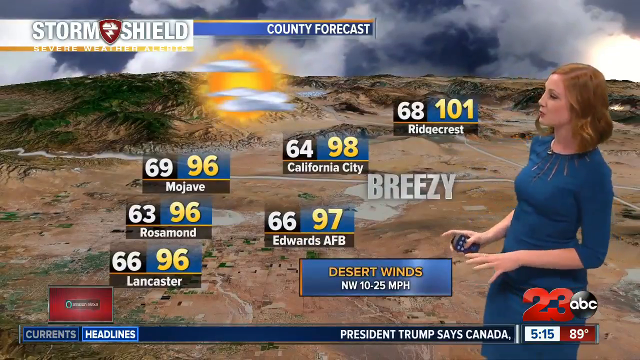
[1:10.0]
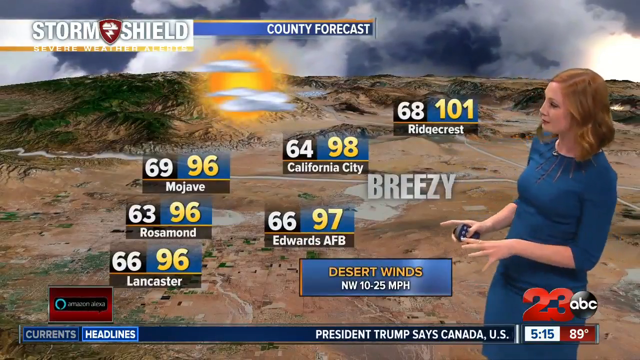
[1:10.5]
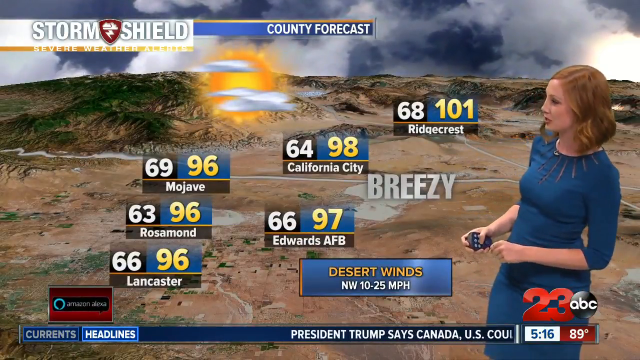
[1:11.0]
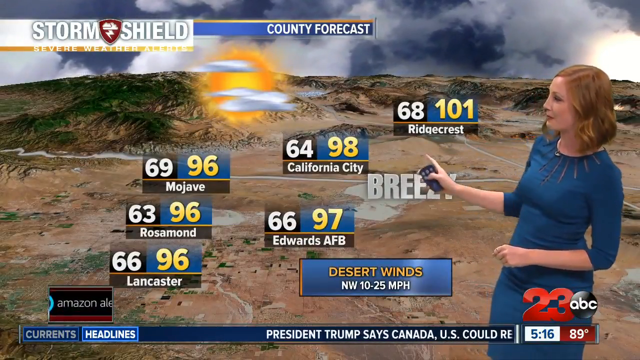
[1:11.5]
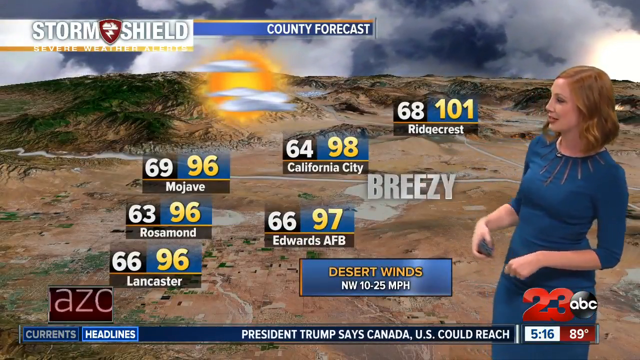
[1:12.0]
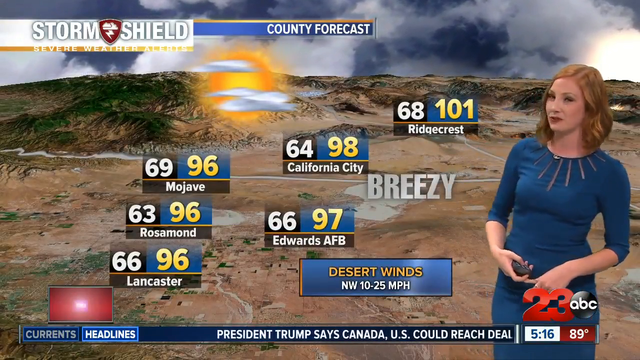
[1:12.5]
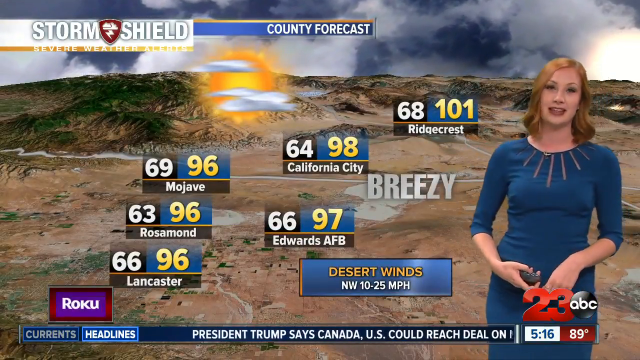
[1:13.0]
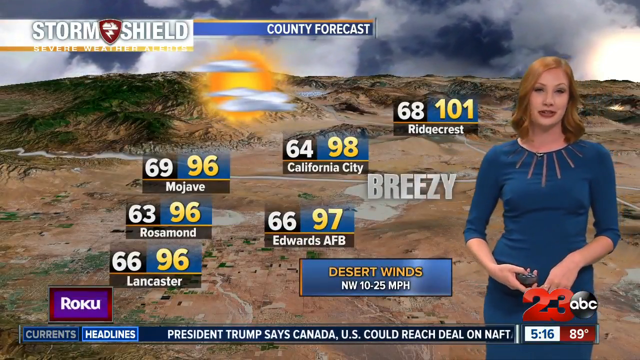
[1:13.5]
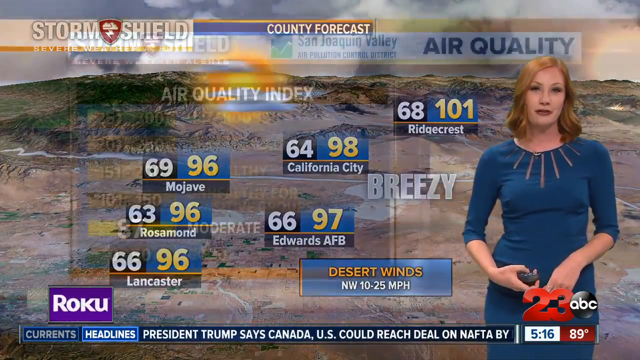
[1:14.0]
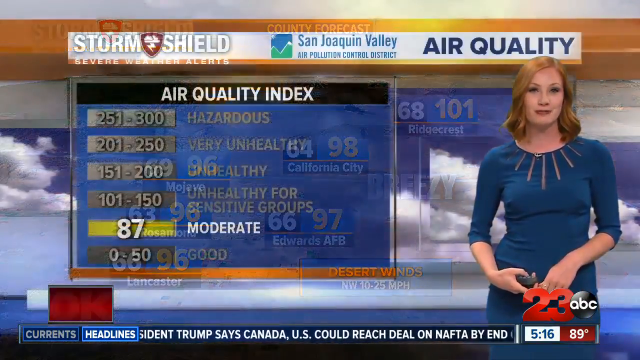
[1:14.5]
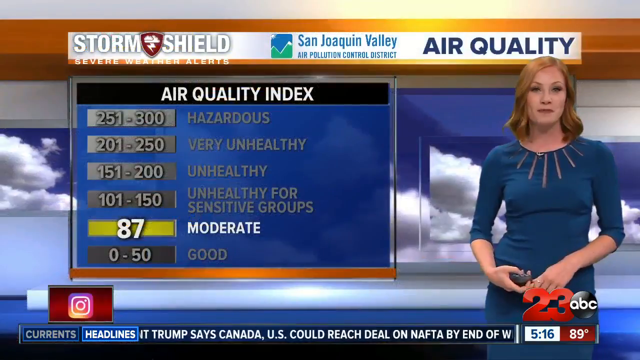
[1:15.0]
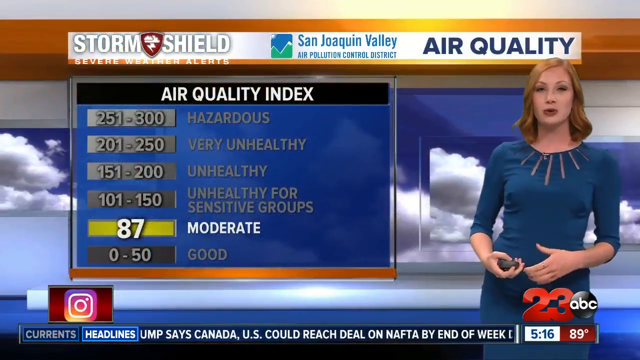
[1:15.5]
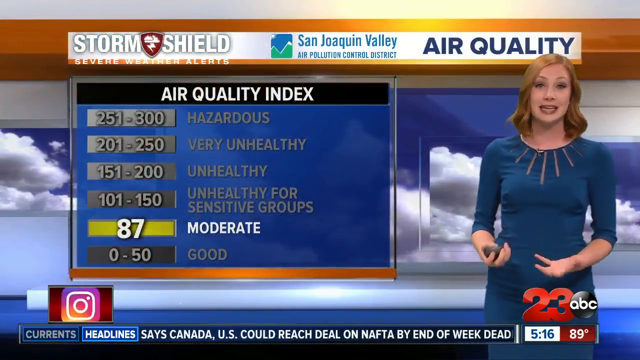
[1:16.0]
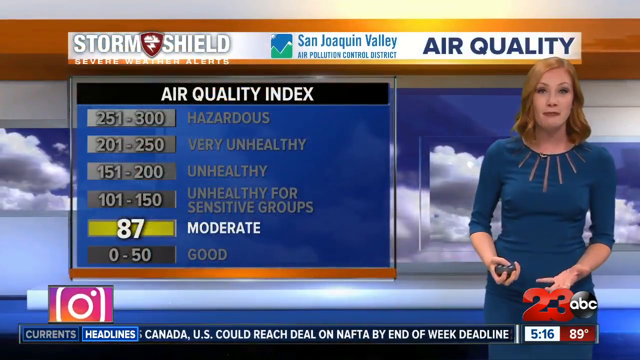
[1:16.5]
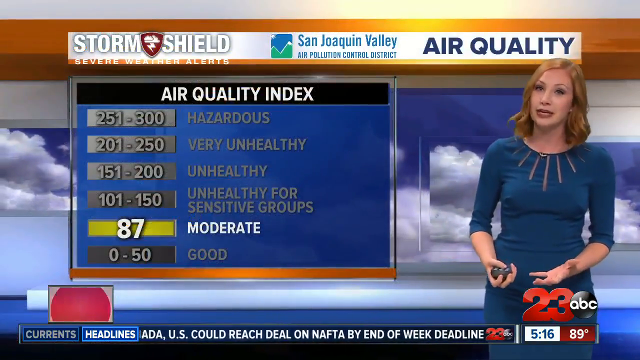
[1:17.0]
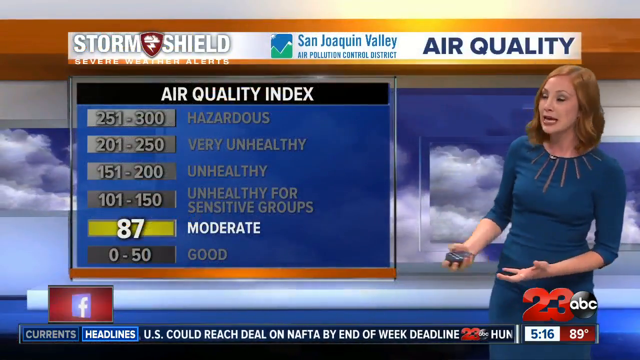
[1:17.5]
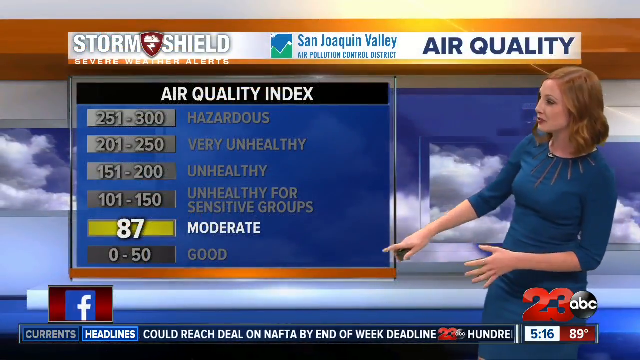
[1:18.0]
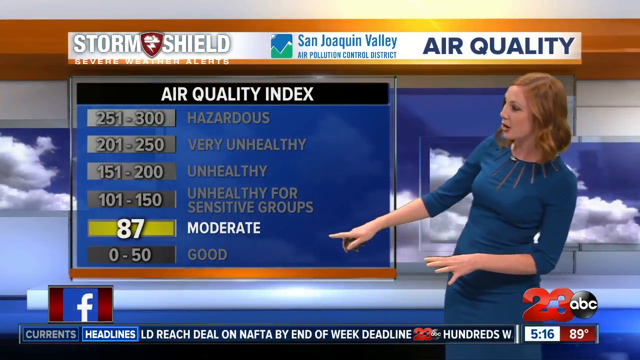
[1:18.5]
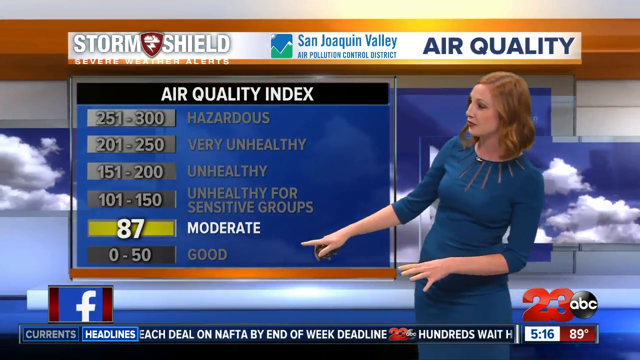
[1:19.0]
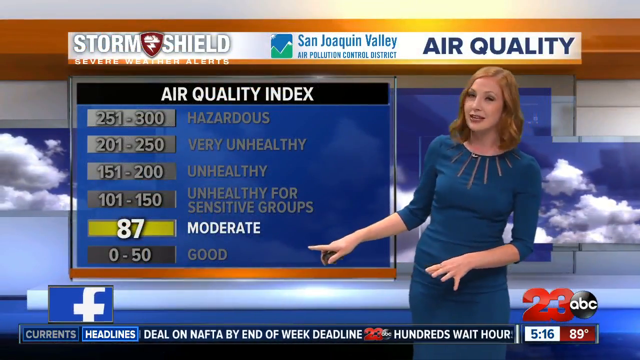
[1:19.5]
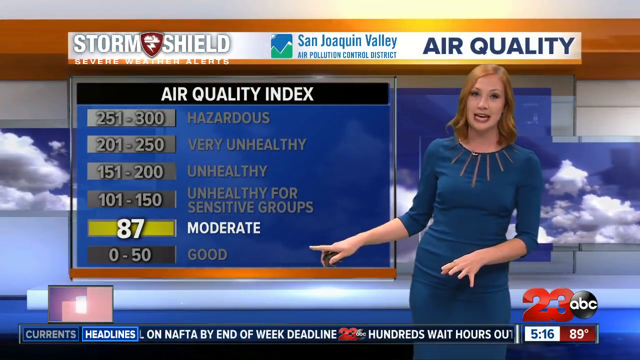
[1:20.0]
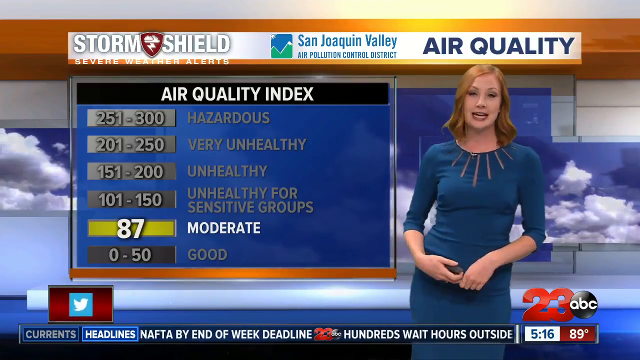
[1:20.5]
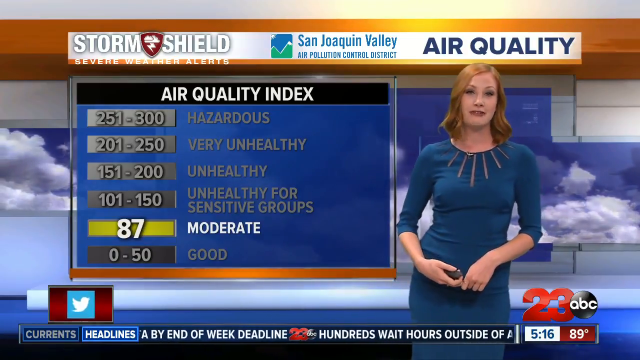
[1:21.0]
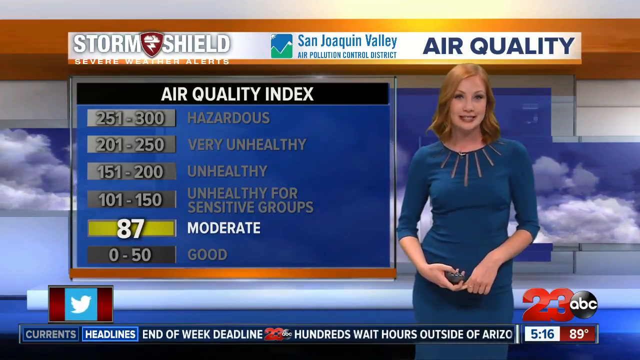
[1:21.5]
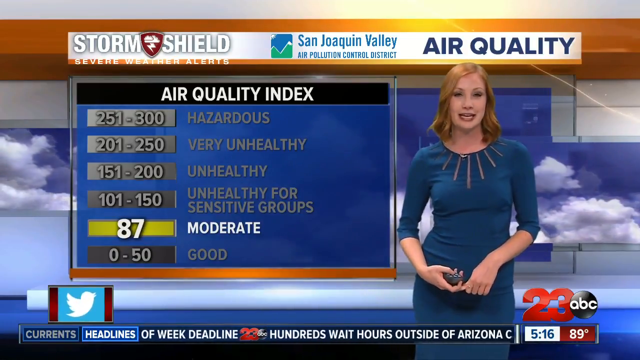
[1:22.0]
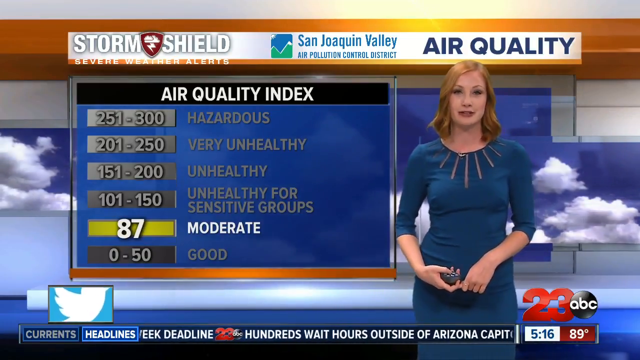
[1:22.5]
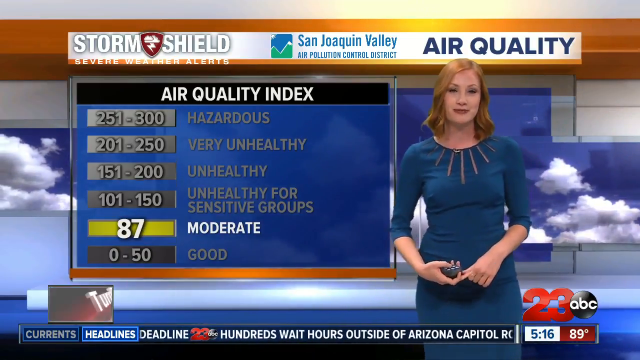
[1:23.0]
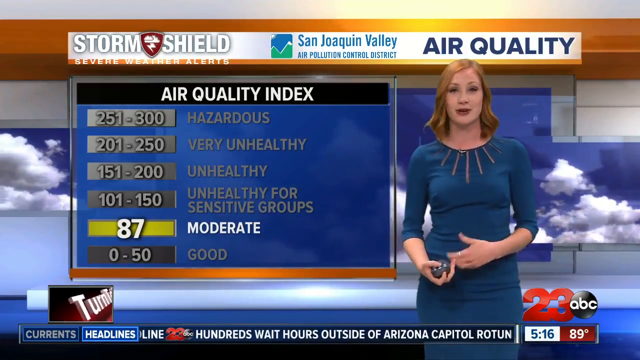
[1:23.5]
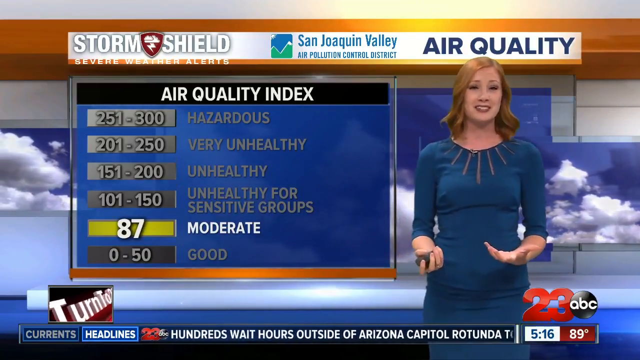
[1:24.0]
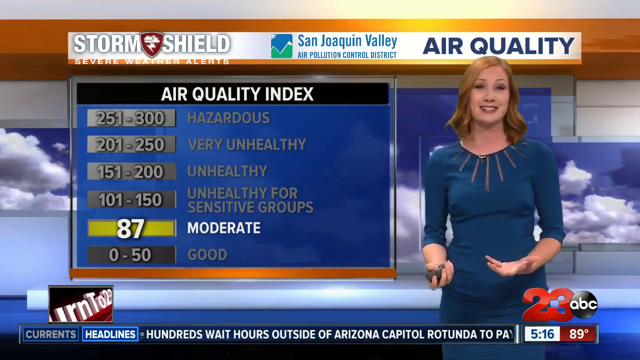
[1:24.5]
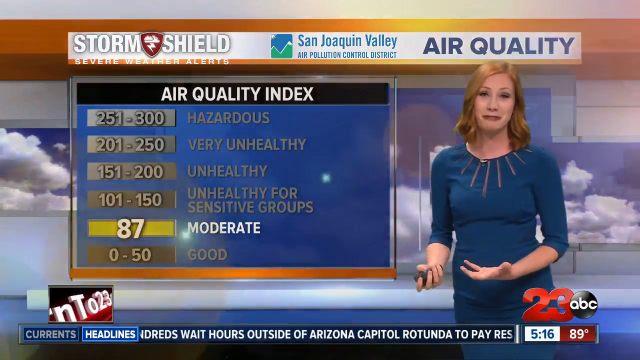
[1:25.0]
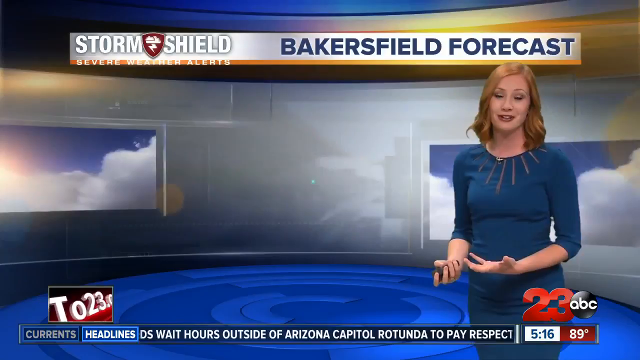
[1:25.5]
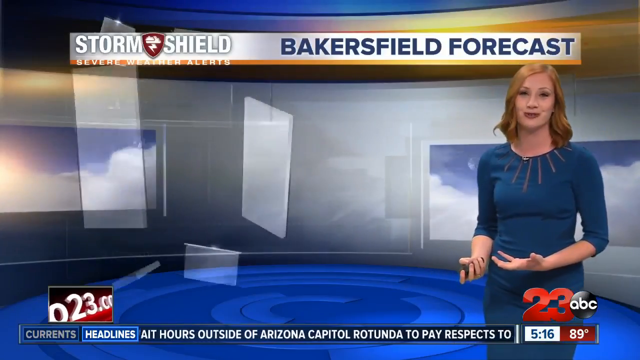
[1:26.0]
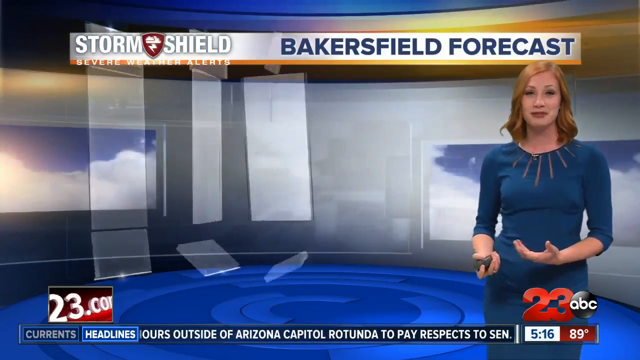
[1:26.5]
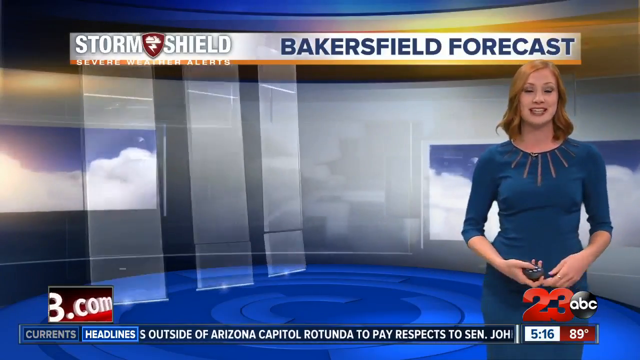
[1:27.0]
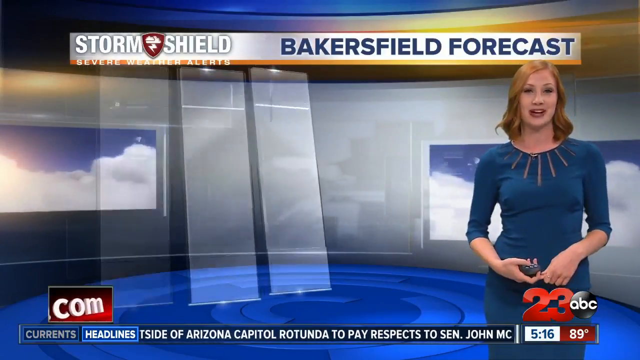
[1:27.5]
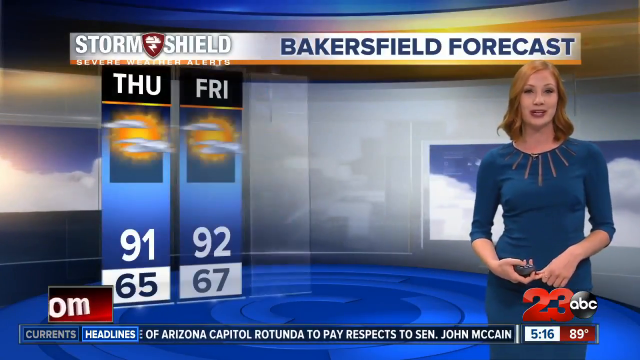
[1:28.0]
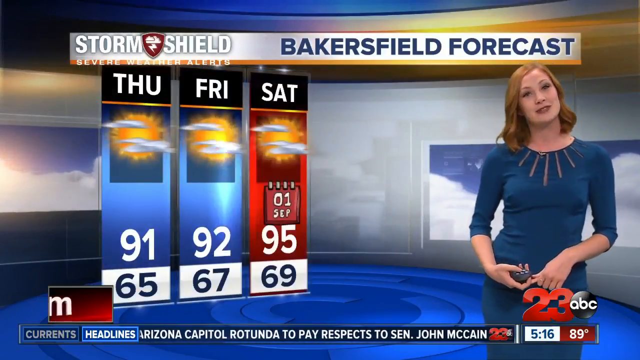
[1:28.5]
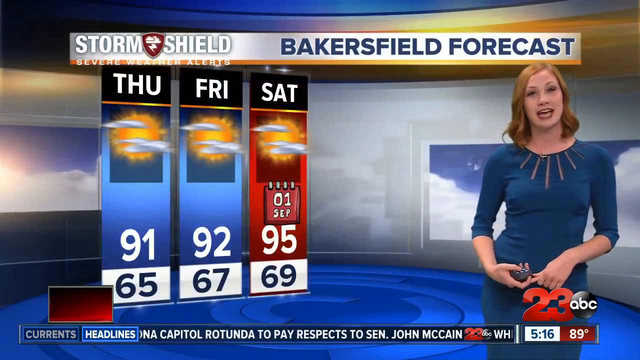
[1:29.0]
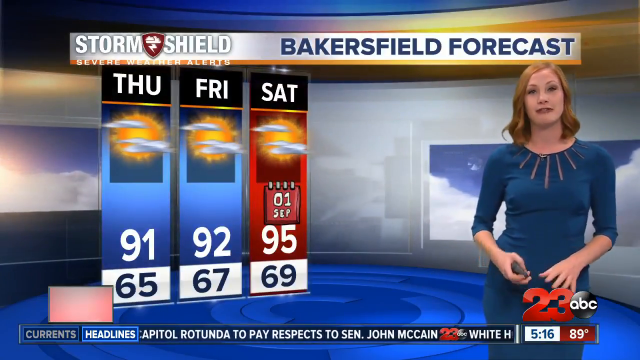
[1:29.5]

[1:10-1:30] A female news reporter with long blonde hair, wearing a blue dress and holding a remote in her right hand, stands next to a large screen display in a news studio. The display shows different cities with different numbers, and she gestures and points at it as she reports. The display changes to show an air quality index: 251 to 300 hazardous, 201 to 250 very unhealthy, 151 to 200 unhealthy, 101 to 150 unhealthy for sensitive groups, 87 moderate, and 0 to 50 good. She continues pointing at the screen as it changes to a Bakersfield forecast: Thursday 91 and 65, Friday 92 to 67, and Saturday 95 to 69. The reporter moves closer to and away from the screen as she continues reporting on the weather displayed.